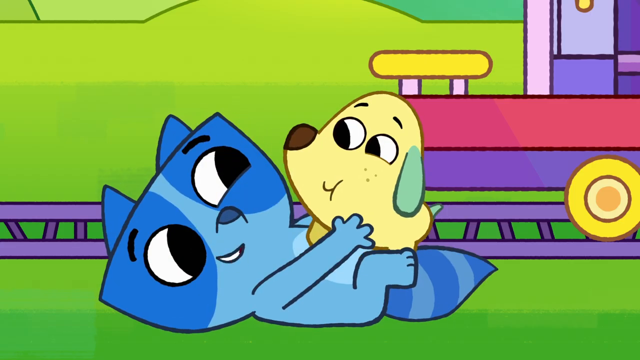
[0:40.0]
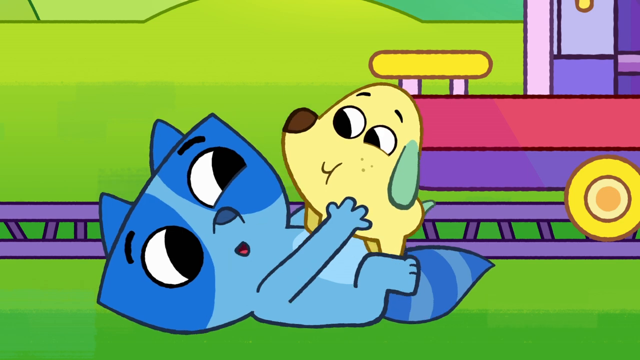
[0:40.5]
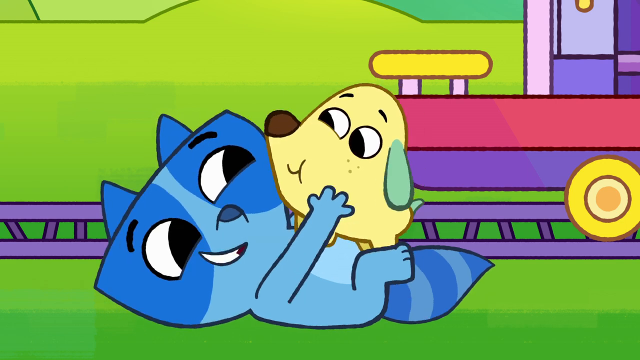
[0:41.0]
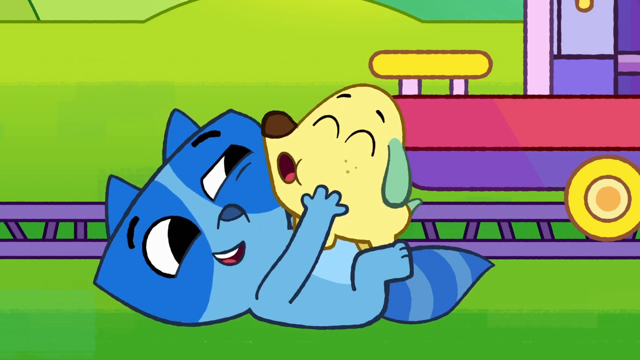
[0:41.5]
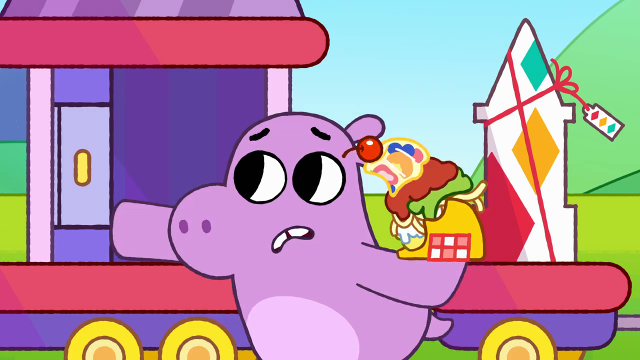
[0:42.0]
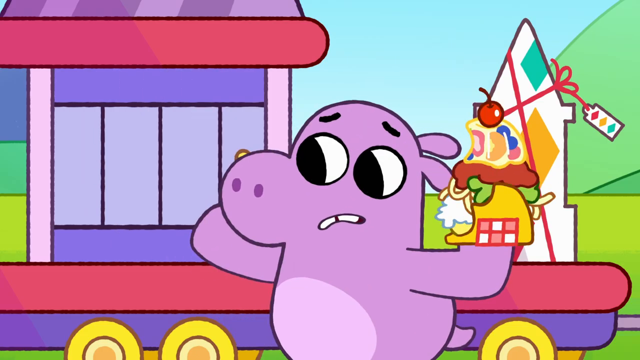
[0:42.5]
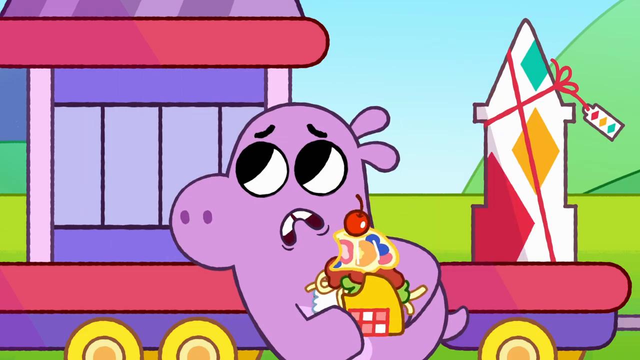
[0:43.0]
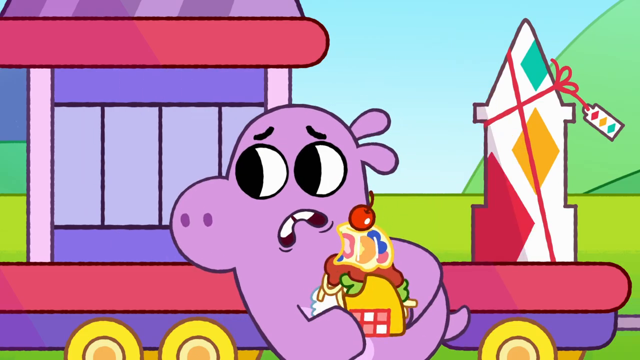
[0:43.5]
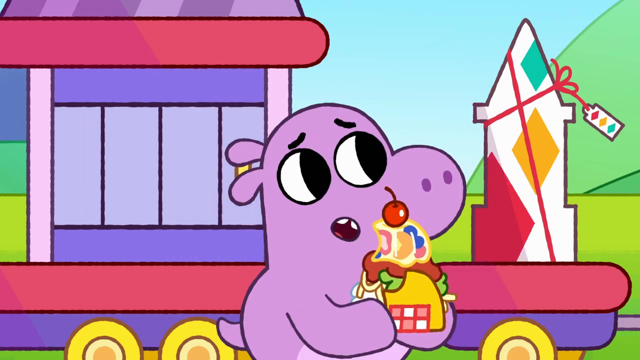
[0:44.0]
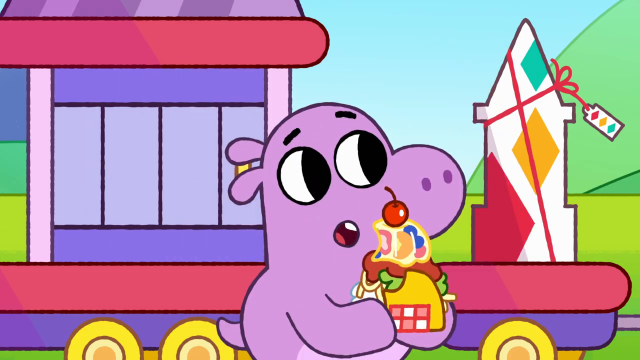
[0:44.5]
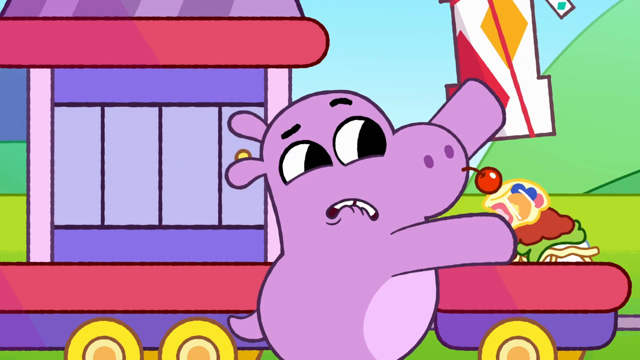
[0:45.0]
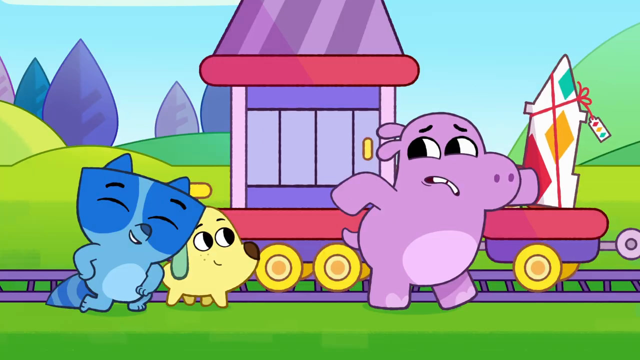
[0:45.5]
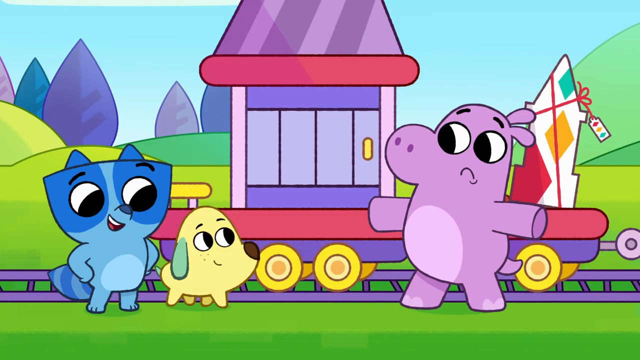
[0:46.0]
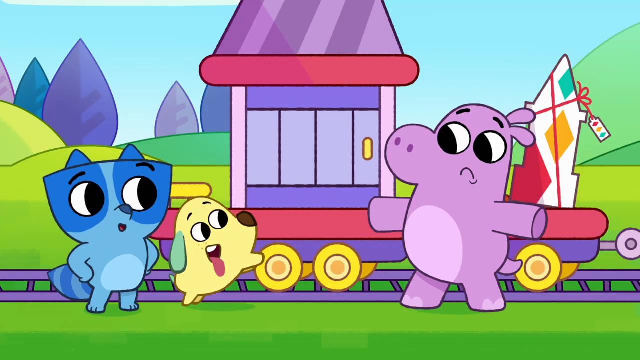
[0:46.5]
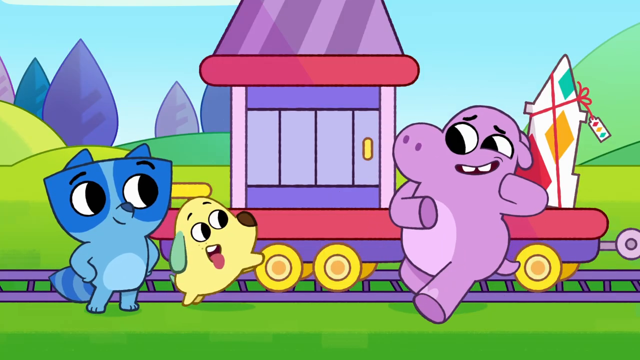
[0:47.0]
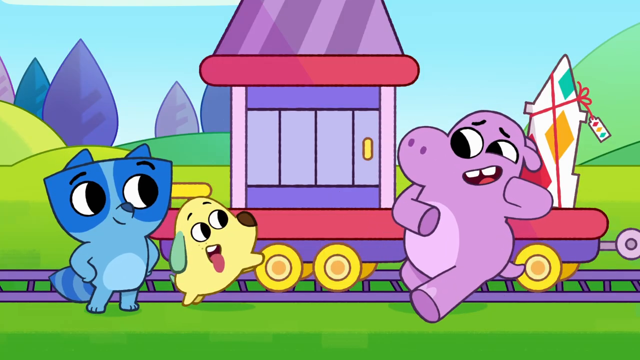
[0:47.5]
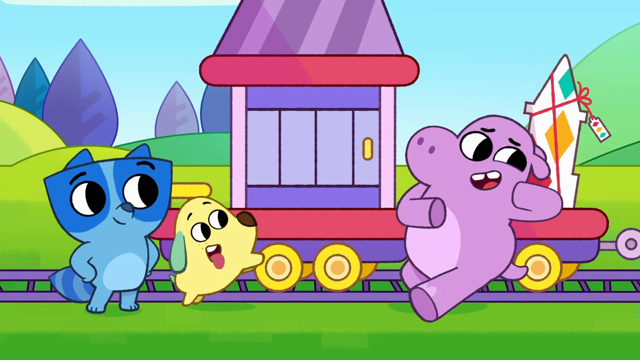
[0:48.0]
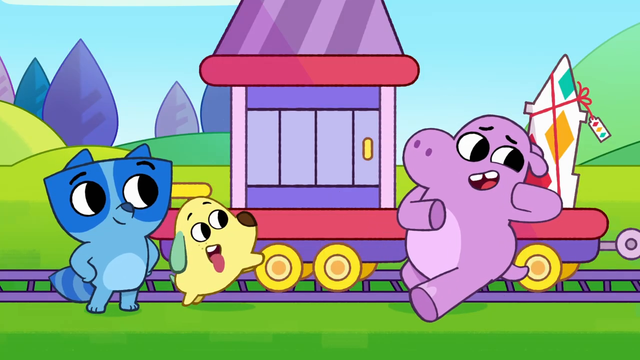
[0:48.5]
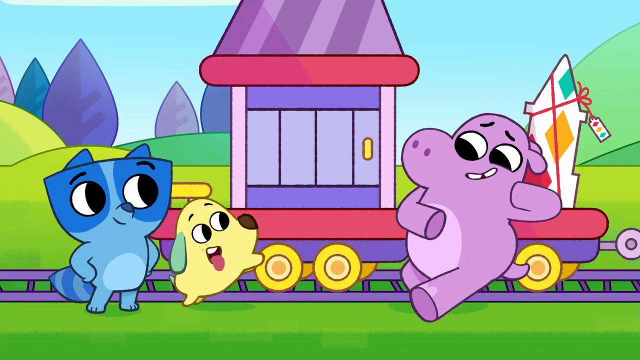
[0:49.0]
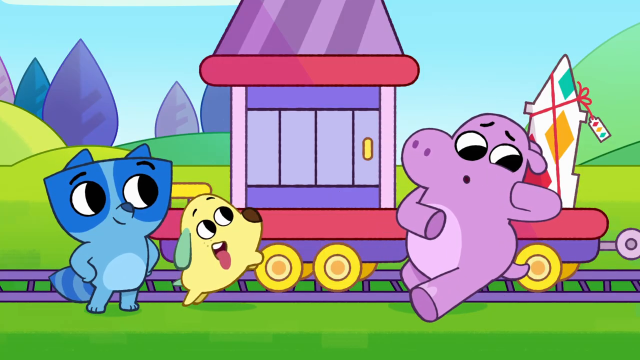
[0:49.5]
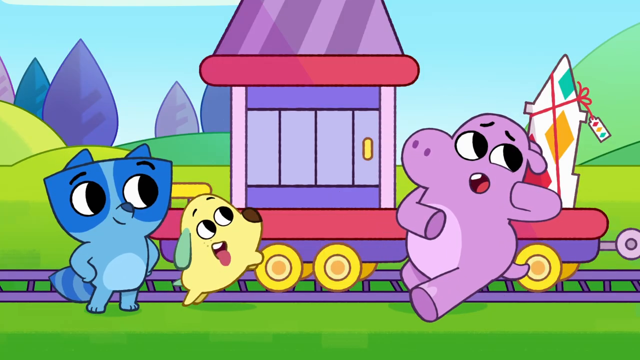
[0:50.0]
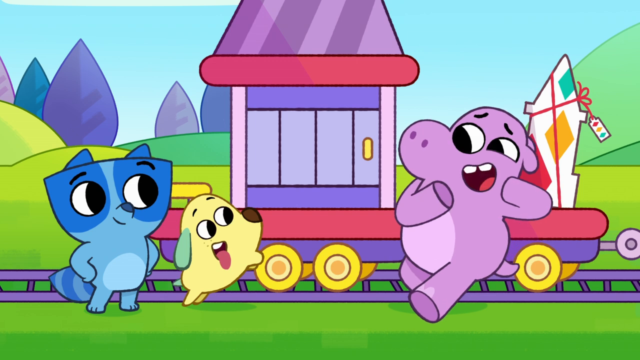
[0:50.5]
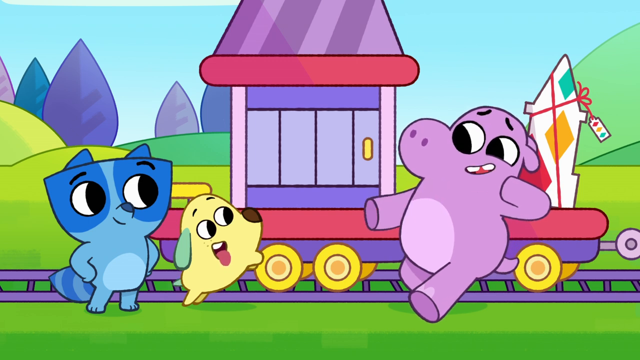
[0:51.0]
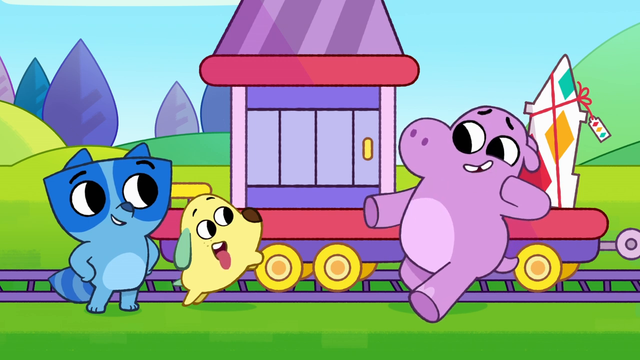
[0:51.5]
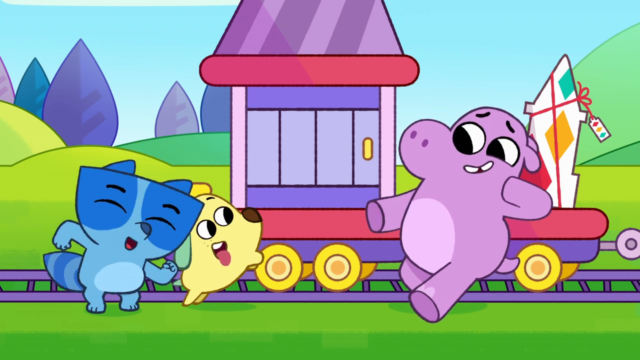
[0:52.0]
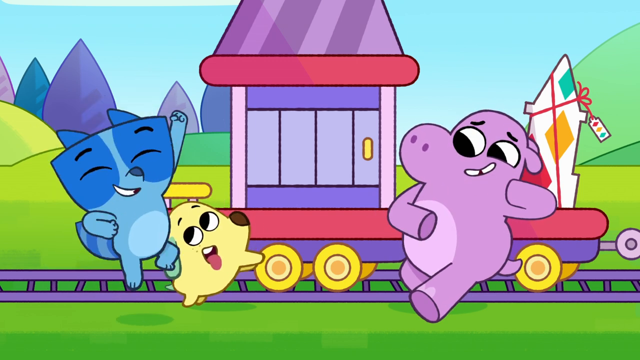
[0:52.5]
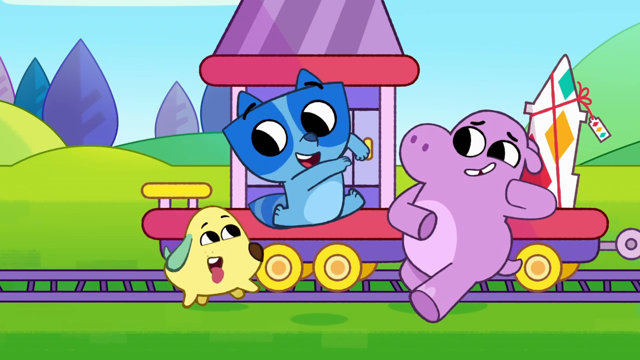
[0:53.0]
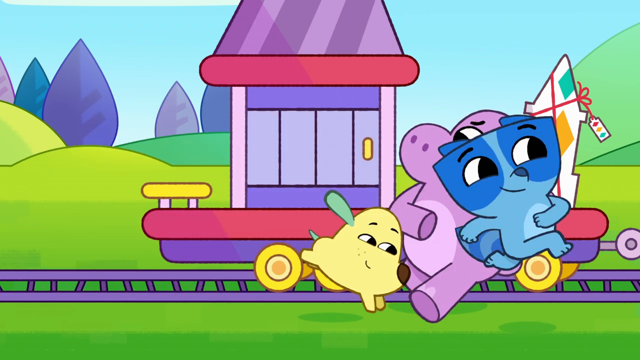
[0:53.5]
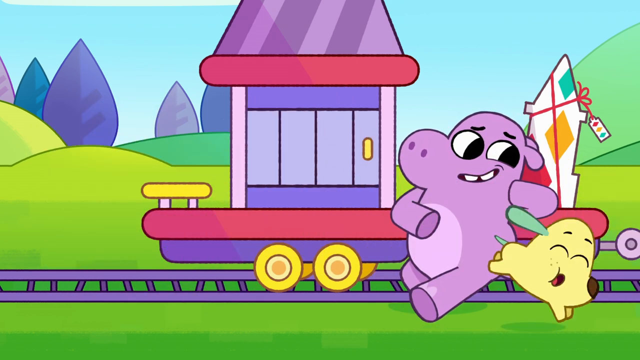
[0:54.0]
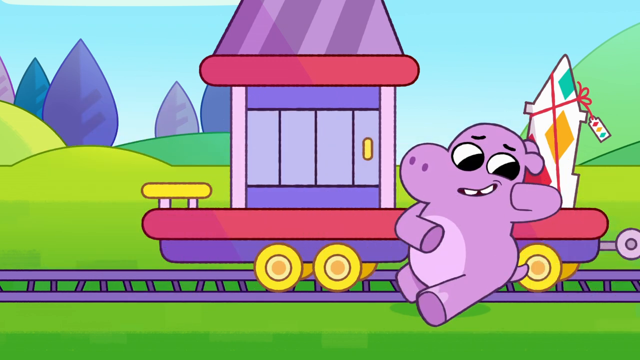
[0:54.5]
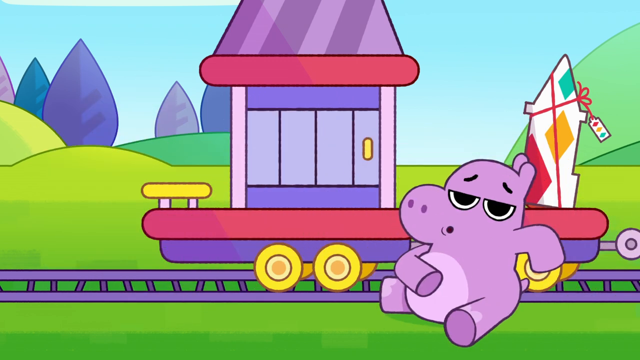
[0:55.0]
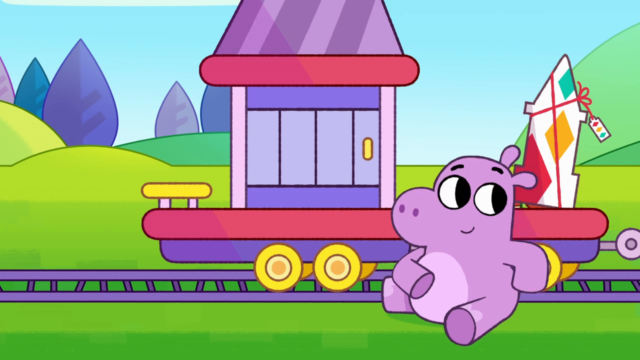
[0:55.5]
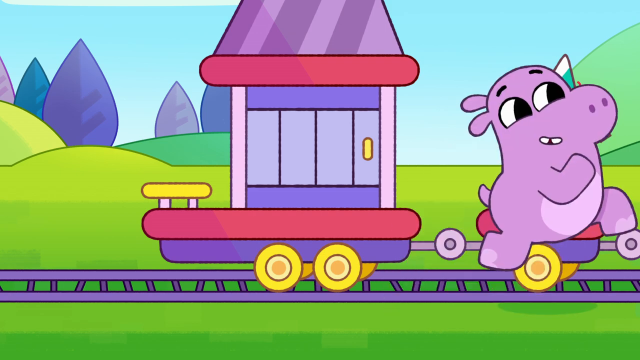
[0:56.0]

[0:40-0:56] The dog is on top of the blue bear-like animal, kissing him, and they are both happy. The hippopotamus has the cake in his hand and tries to hide it. It puts the cake on the other carriage and puts something on top of it, apparently a present, since it has a bow tie on it. The purple hippopotamus looks like it is trying to hide something and looks mysterious, but the dog and the bear are still happy. They look at the hippopotamus, and they all talk to each other happily. The blue bear jumps up and down, and then they all jump up and down, happy.